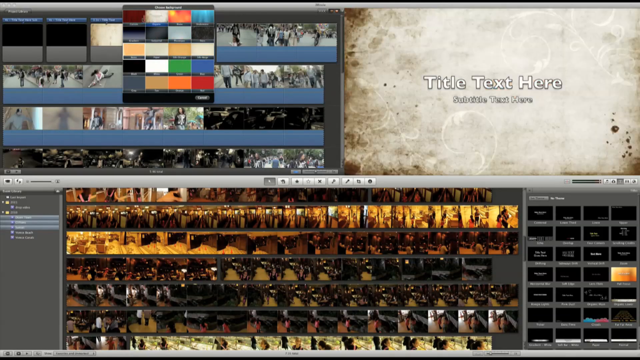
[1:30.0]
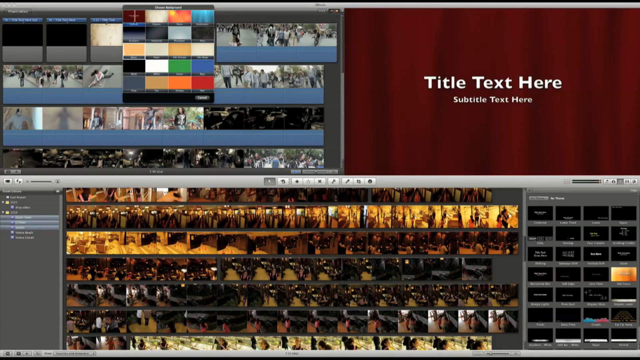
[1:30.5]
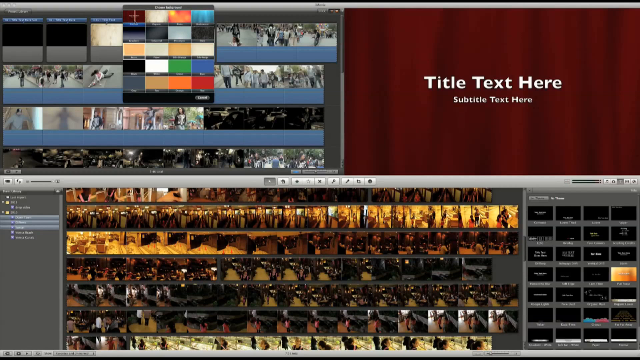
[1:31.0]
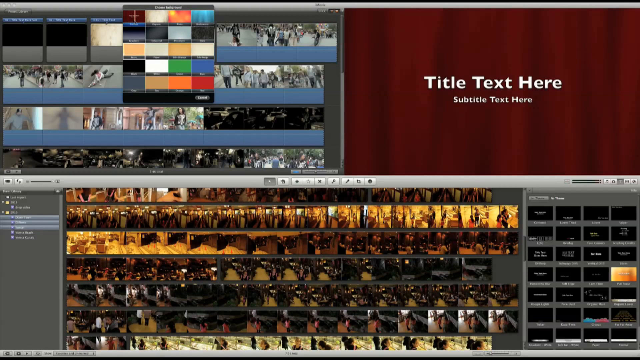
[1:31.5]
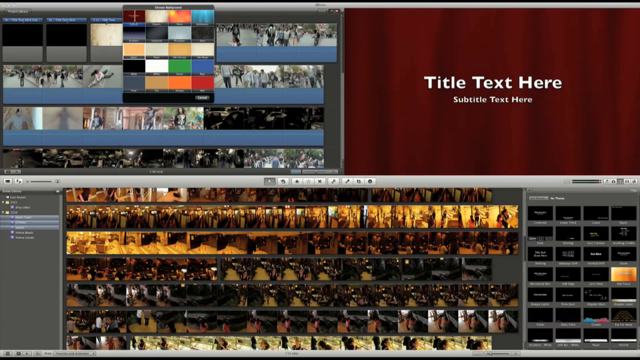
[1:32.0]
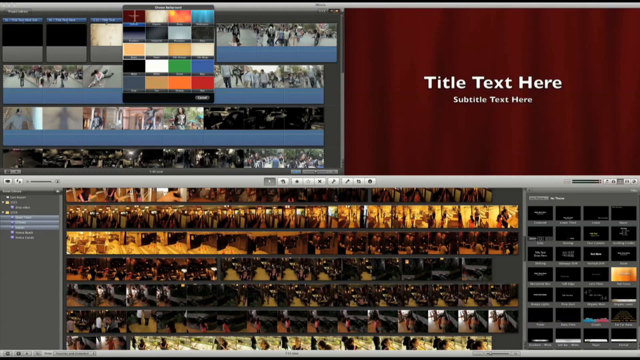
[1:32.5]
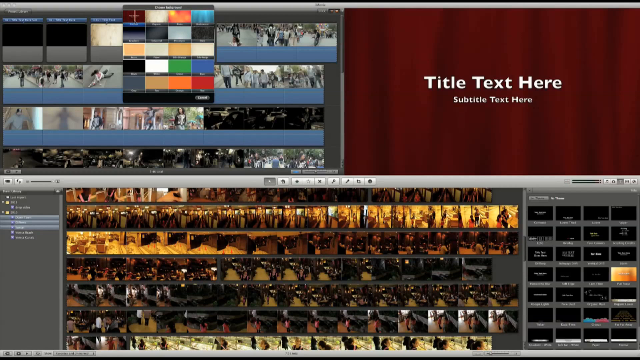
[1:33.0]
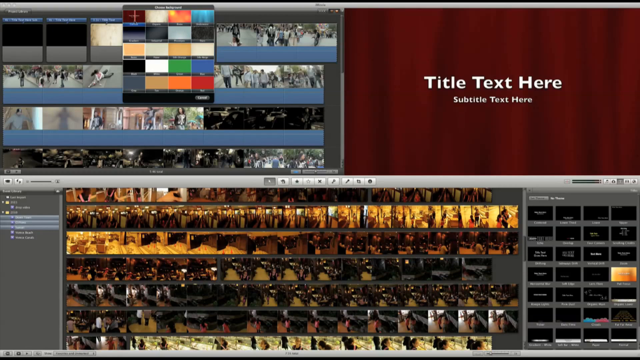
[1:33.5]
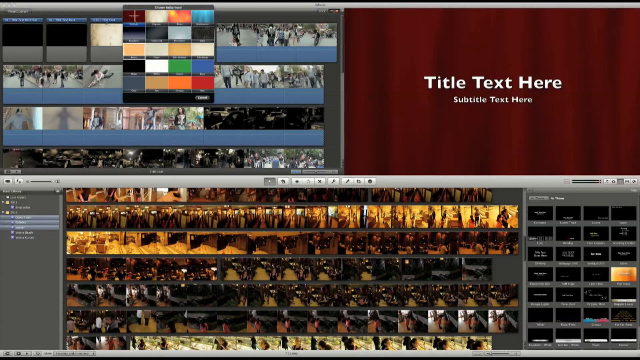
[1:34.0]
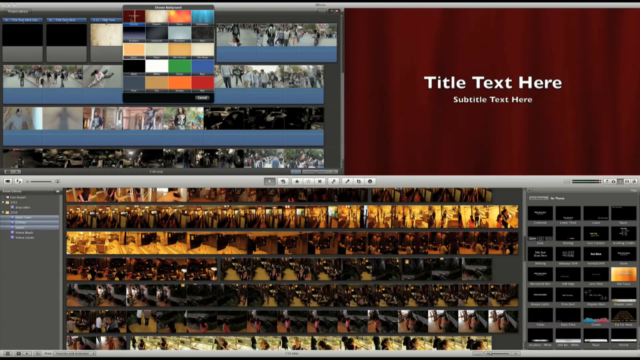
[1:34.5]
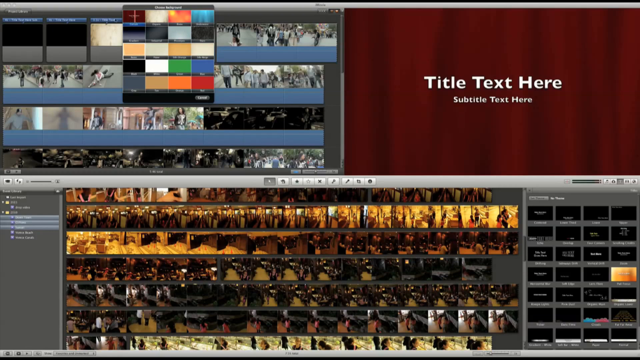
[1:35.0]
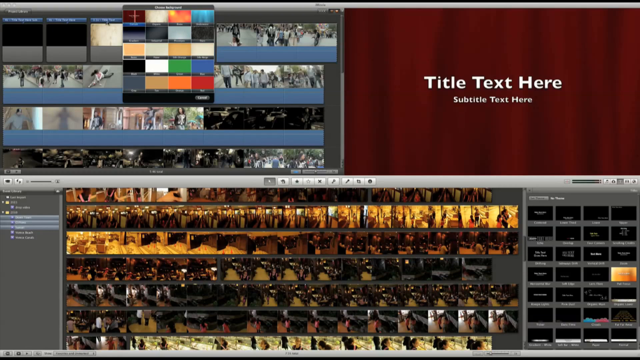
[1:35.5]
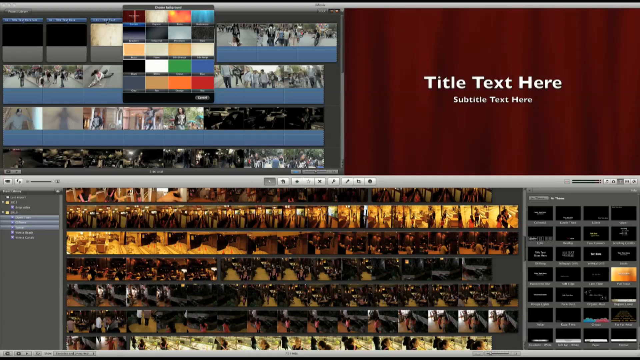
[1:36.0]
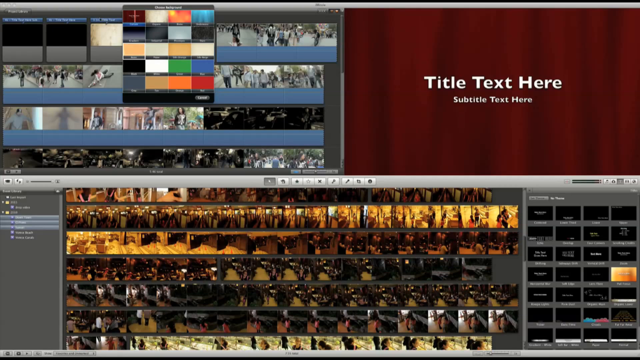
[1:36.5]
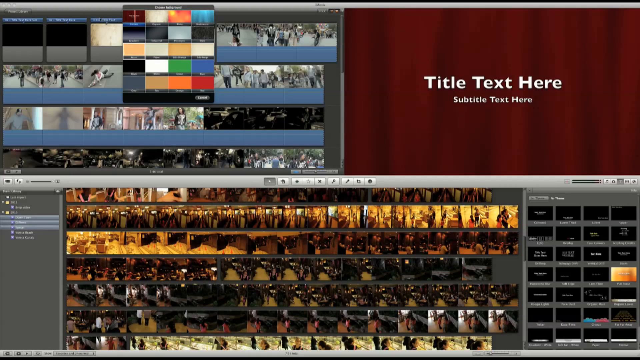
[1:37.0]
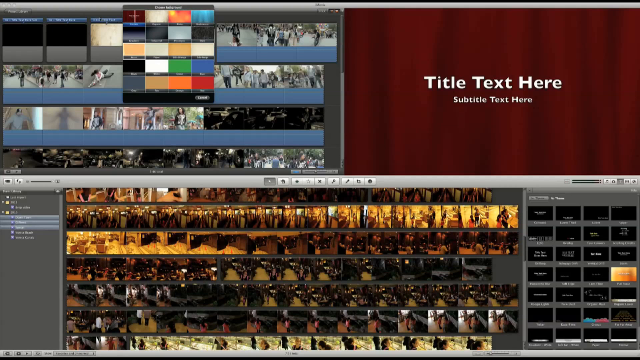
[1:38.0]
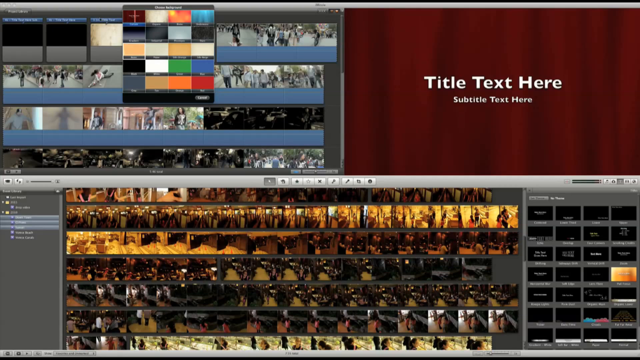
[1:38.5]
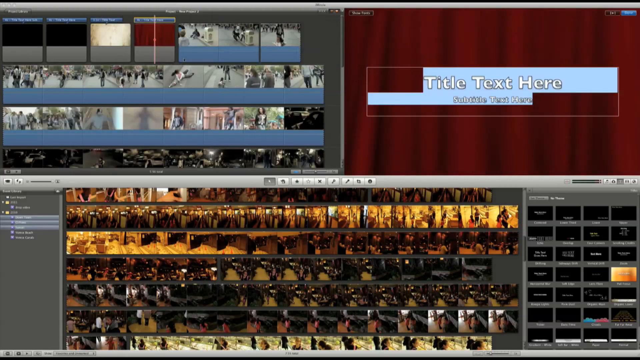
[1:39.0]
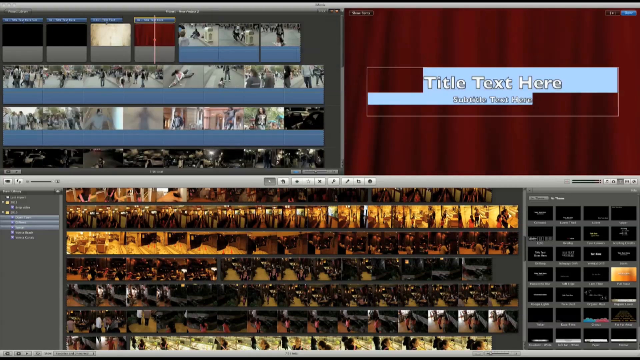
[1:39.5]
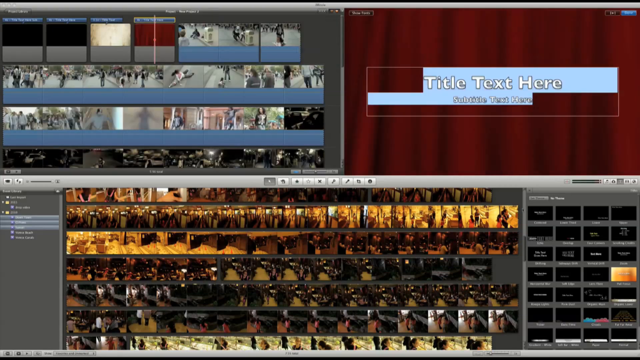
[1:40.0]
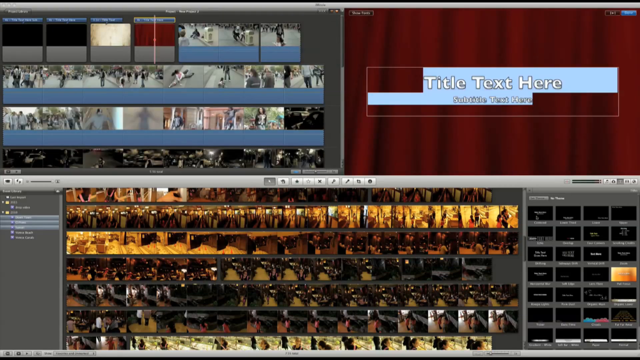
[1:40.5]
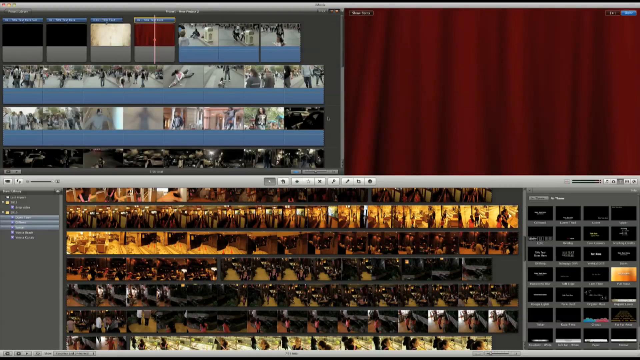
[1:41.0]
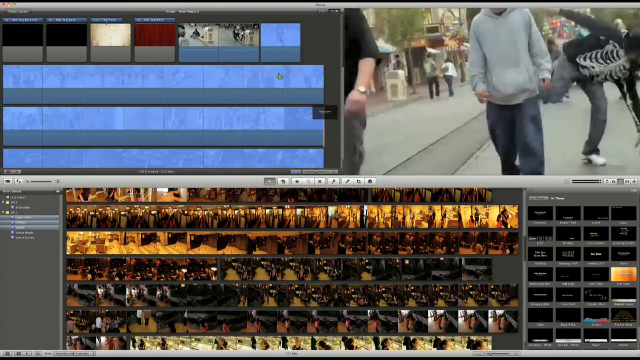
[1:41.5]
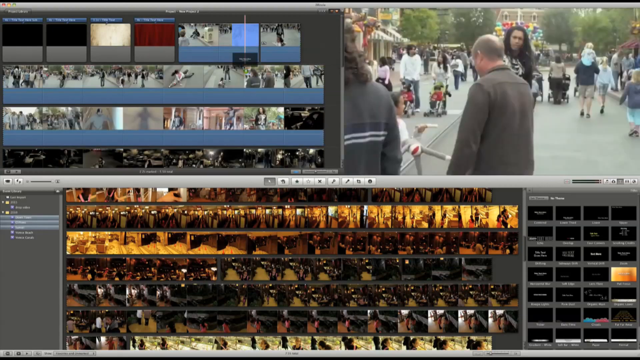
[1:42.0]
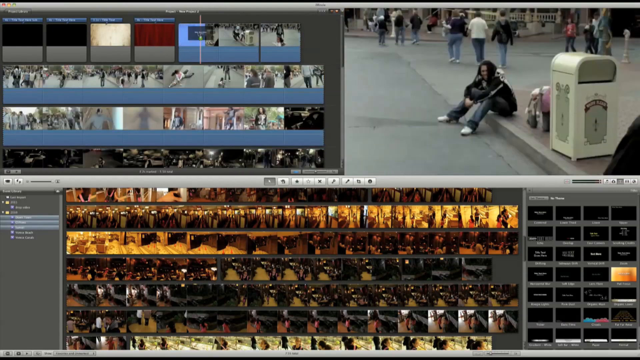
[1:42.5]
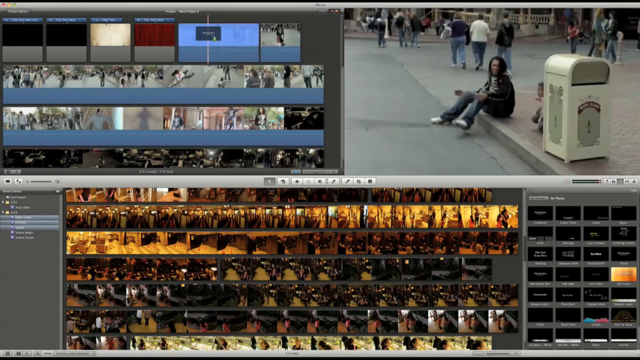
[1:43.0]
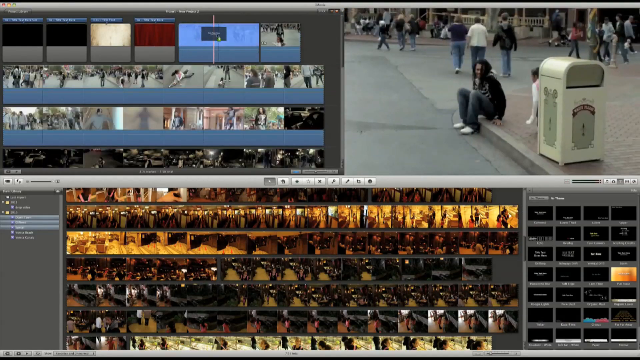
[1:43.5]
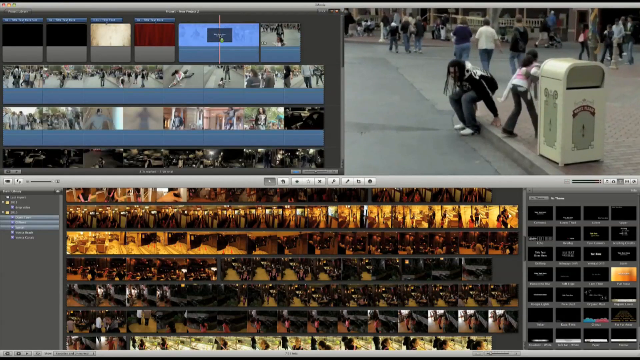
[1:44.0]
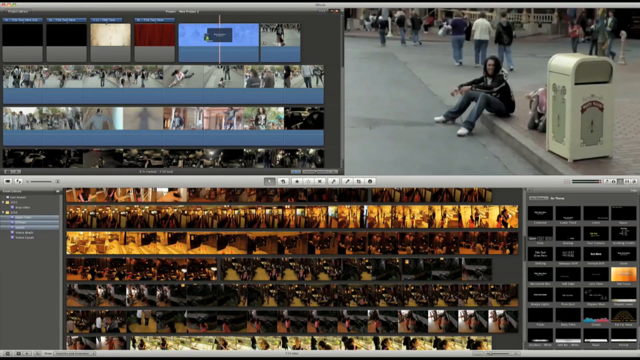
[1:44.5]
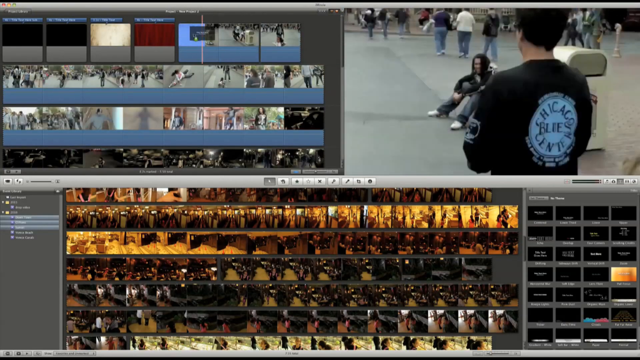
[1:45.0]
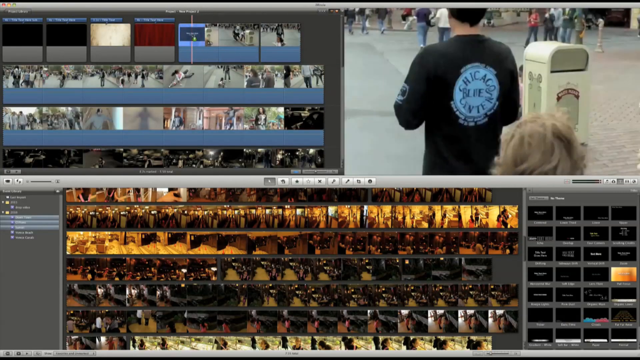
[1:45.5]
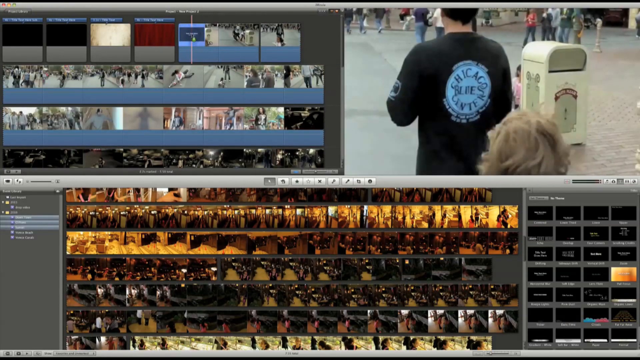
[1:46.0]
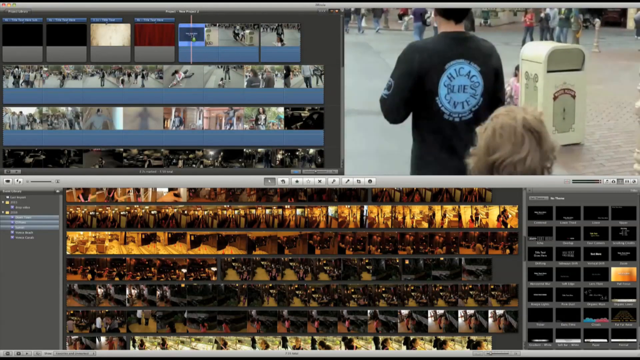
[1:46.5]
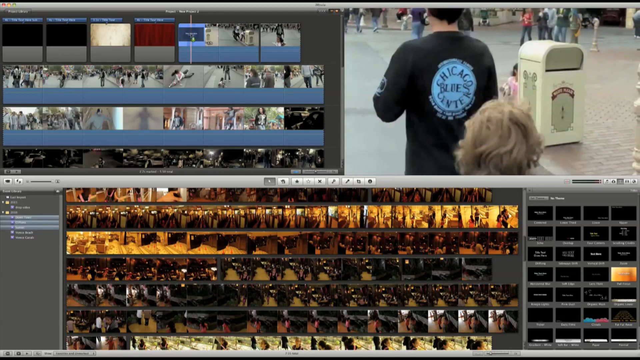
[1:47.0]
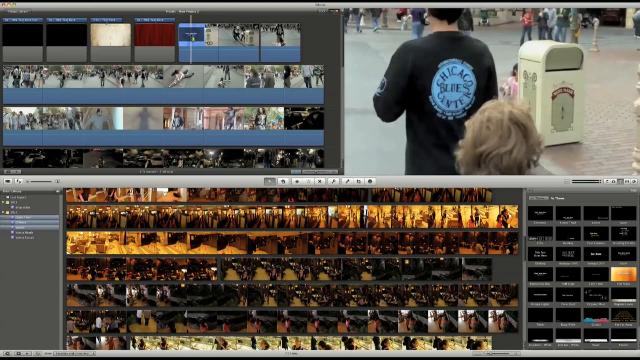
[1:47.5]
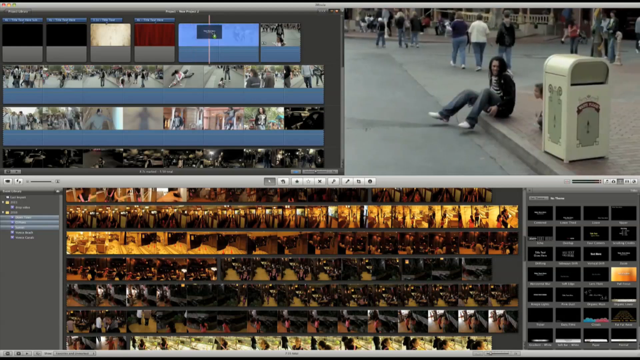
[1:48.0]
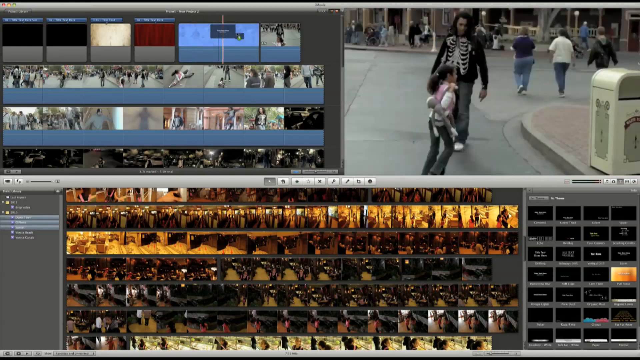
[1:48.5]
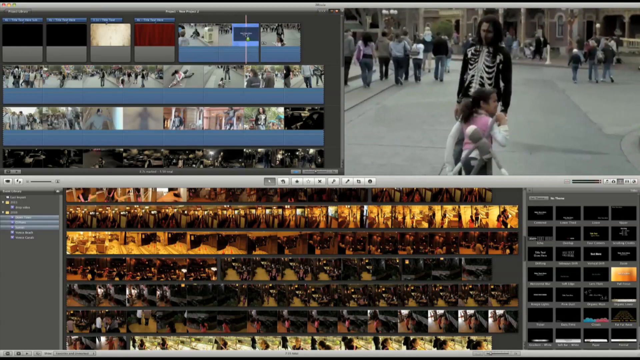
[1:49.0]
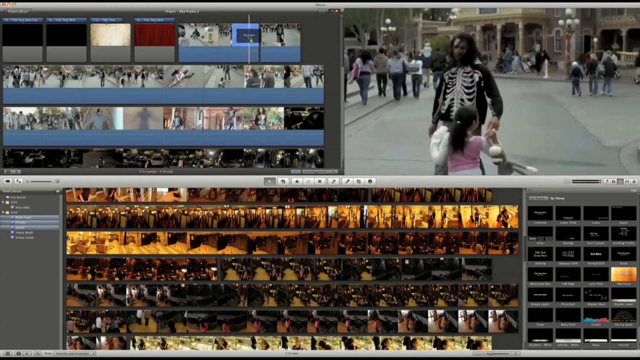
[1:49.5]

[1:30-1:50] The text can be edited. The video of a teenager is dragged forward and backward, moving forward and rewinding frame by frame. The teenager sitting on the pavement wears a black T-shirt with a white skeleton design on the chest. A person walks past the seated teenagers wearing a T-shirt with "Chicago" written on the back. The bottom section shows the hotel footage, which has many frames because it is a bit longer than the other videos. The "edit text here" field is highlighted to enter a title or subtitle.